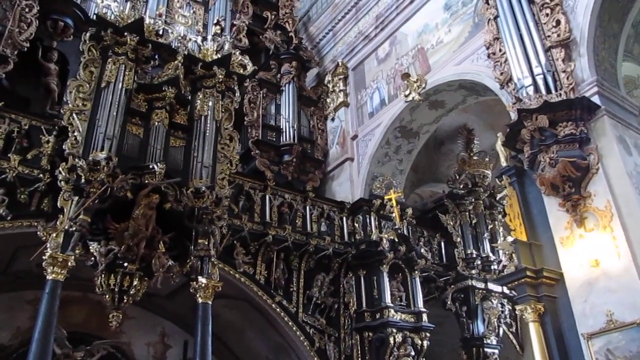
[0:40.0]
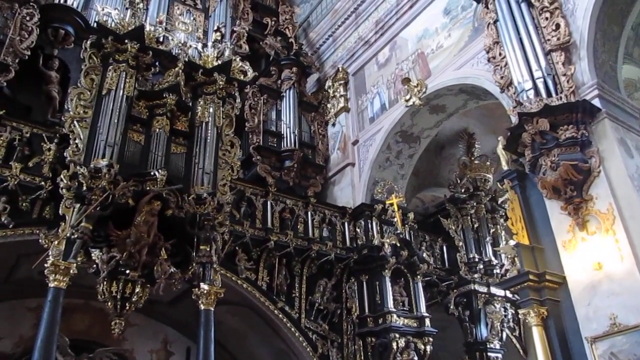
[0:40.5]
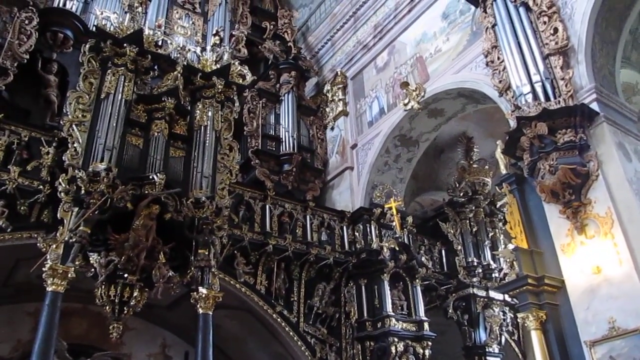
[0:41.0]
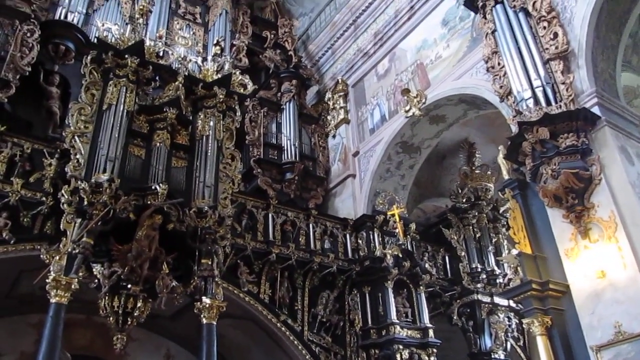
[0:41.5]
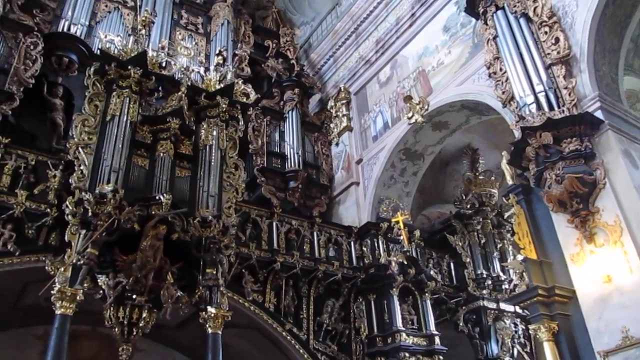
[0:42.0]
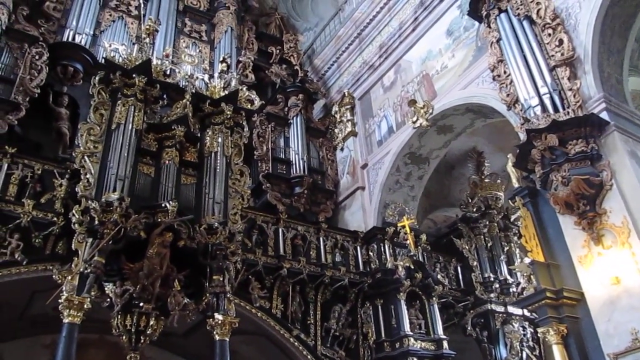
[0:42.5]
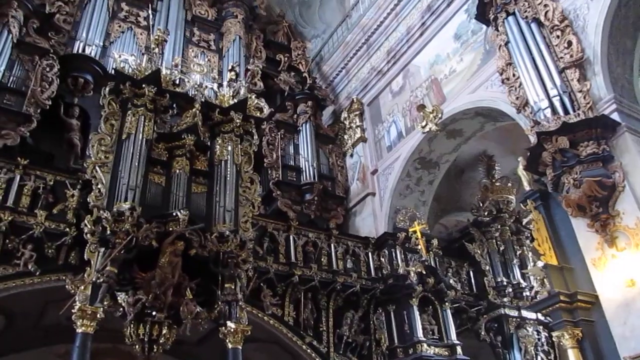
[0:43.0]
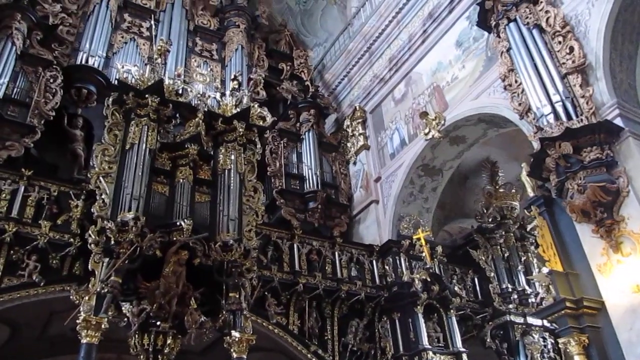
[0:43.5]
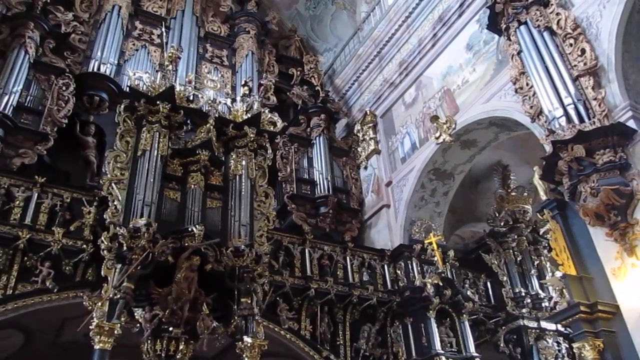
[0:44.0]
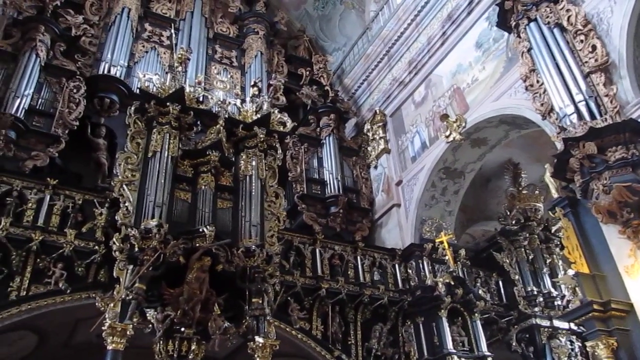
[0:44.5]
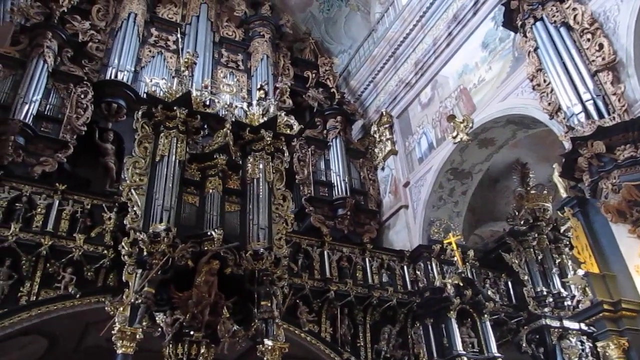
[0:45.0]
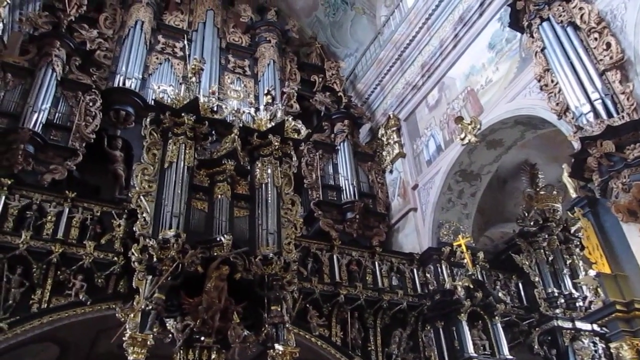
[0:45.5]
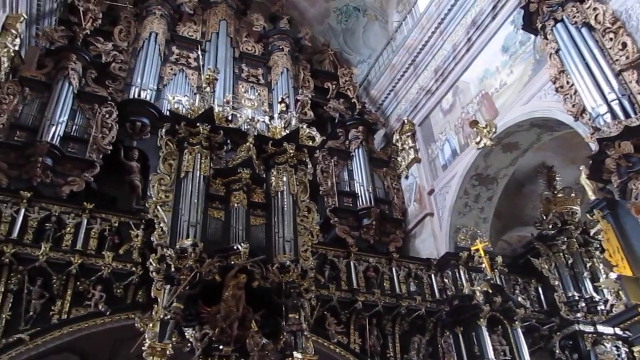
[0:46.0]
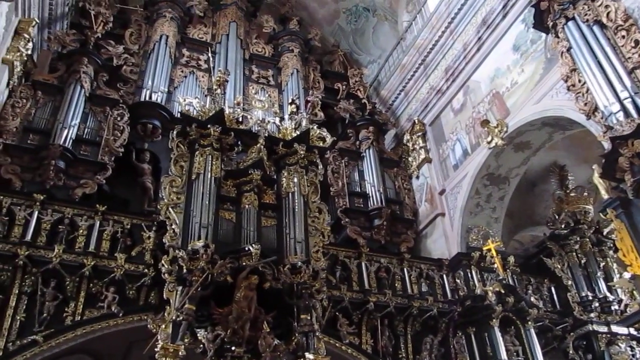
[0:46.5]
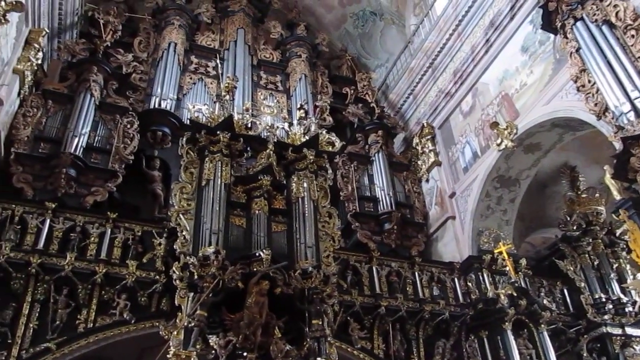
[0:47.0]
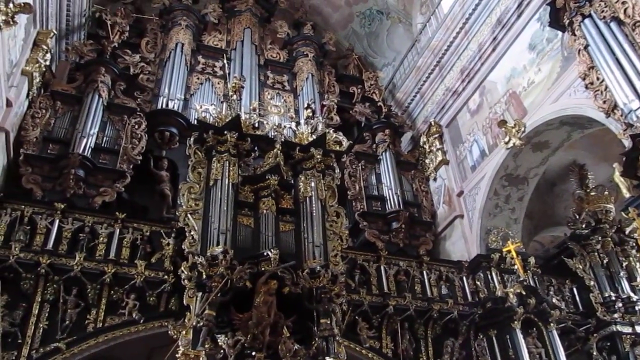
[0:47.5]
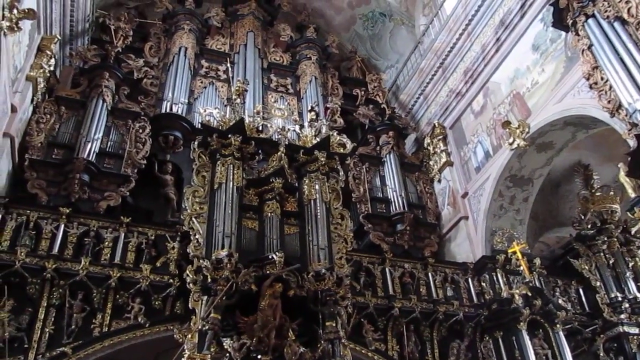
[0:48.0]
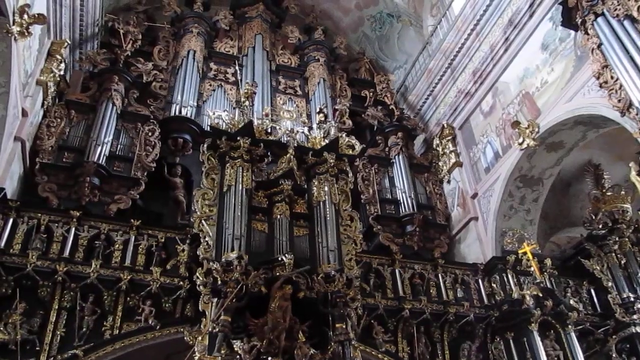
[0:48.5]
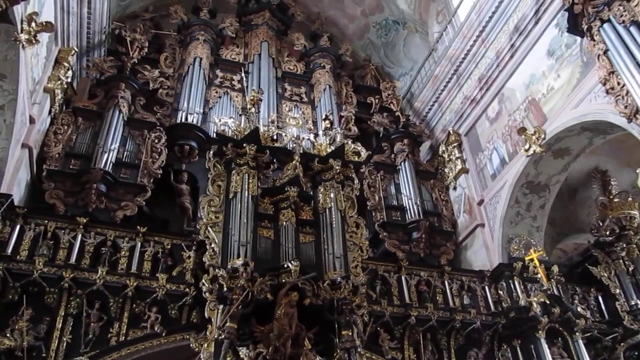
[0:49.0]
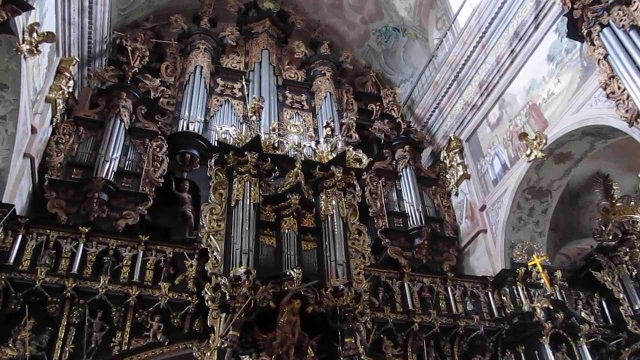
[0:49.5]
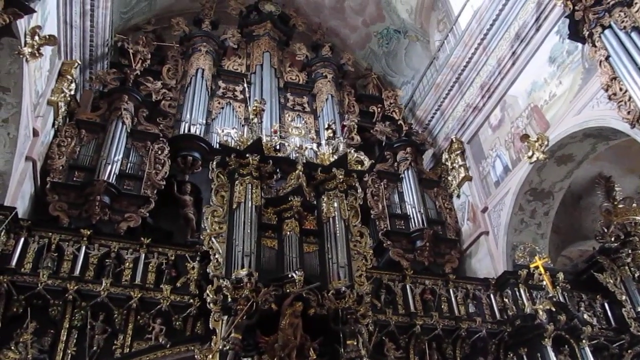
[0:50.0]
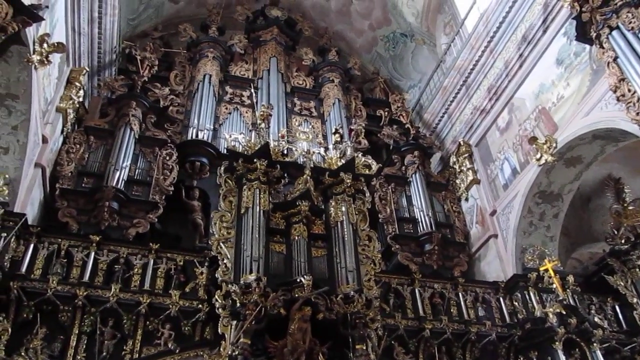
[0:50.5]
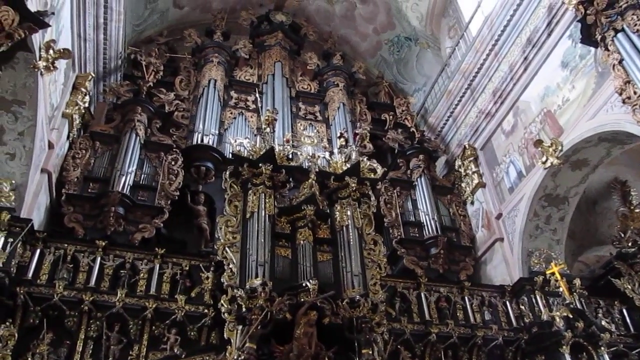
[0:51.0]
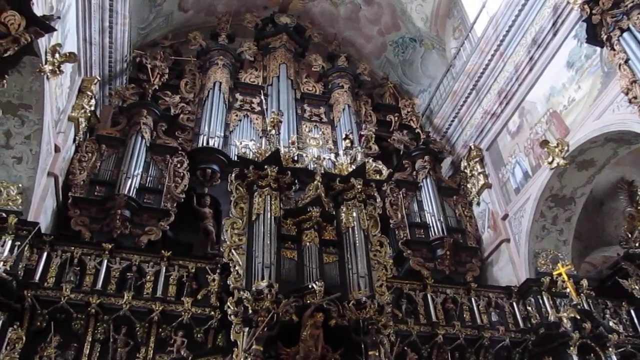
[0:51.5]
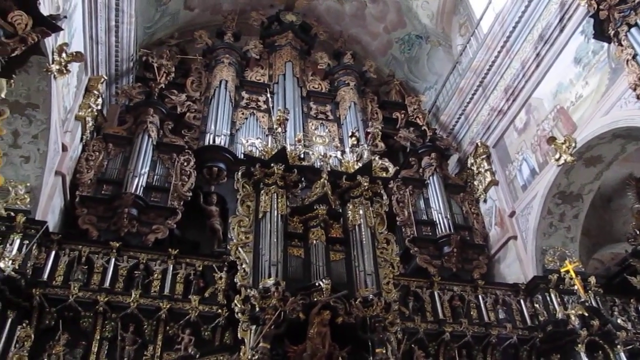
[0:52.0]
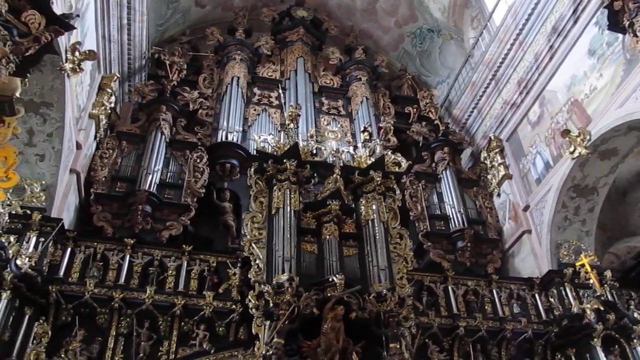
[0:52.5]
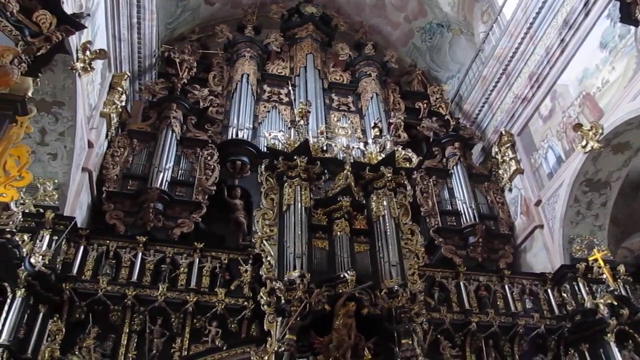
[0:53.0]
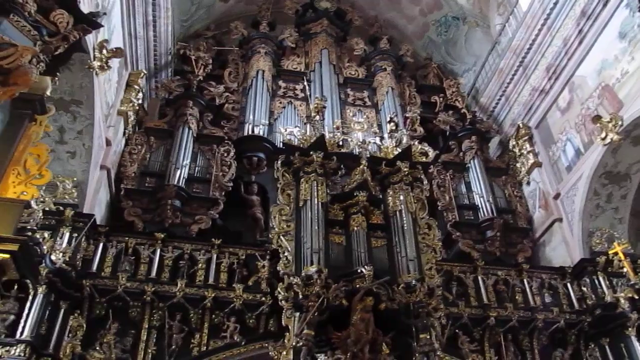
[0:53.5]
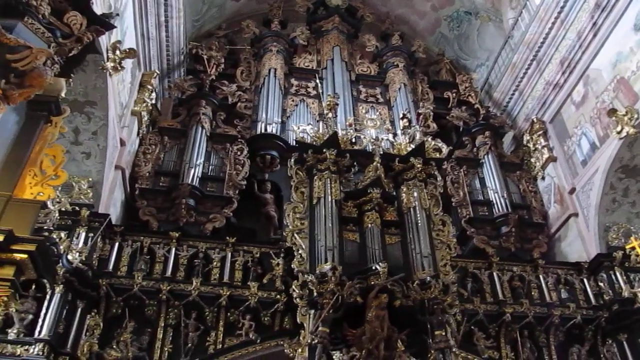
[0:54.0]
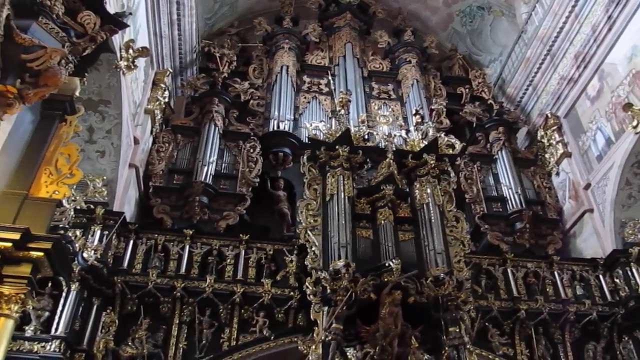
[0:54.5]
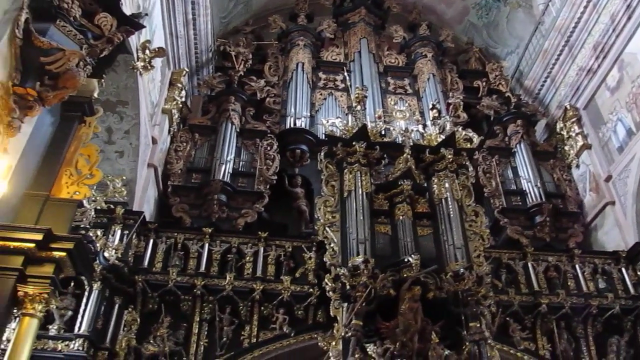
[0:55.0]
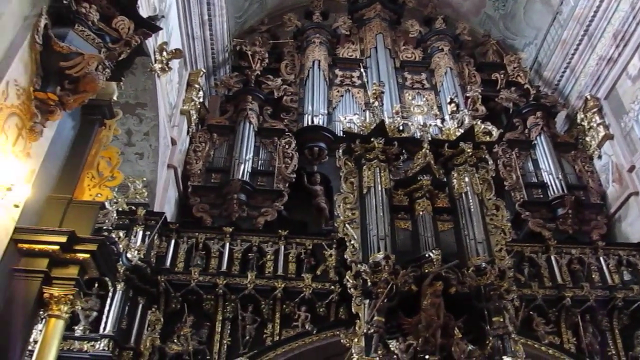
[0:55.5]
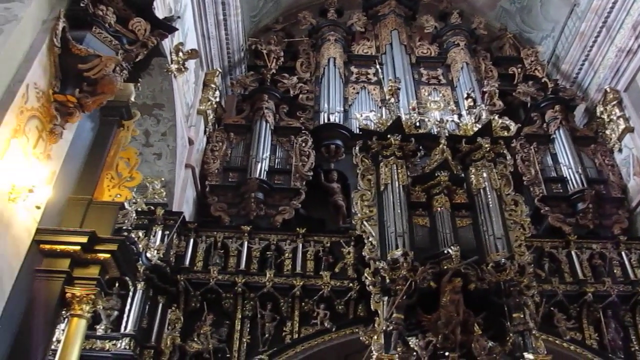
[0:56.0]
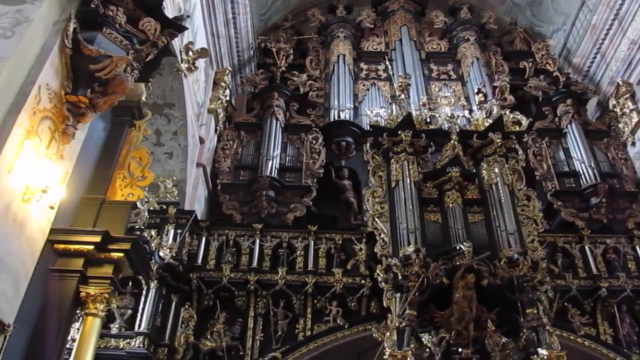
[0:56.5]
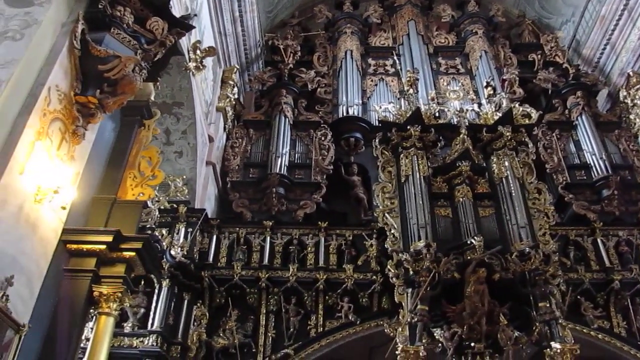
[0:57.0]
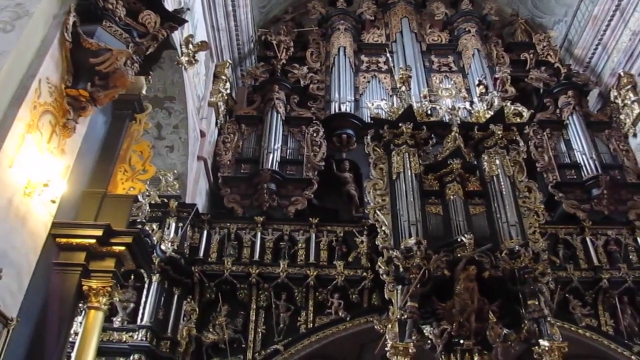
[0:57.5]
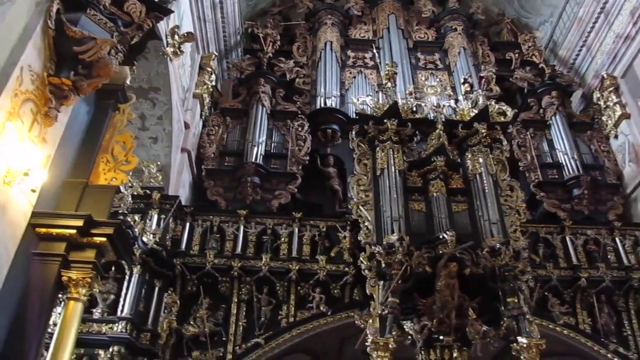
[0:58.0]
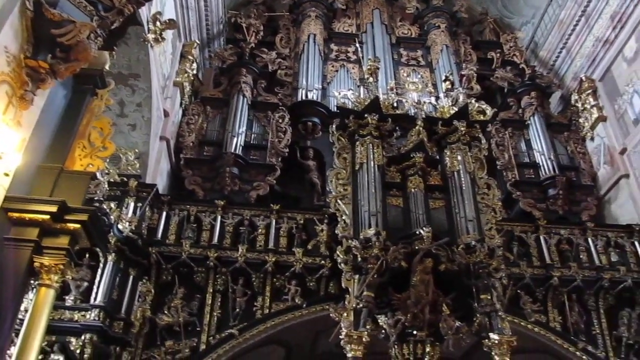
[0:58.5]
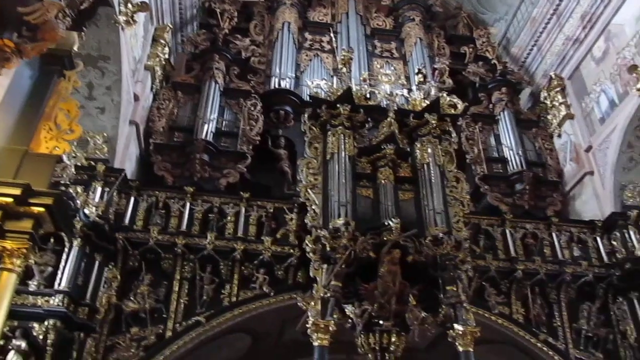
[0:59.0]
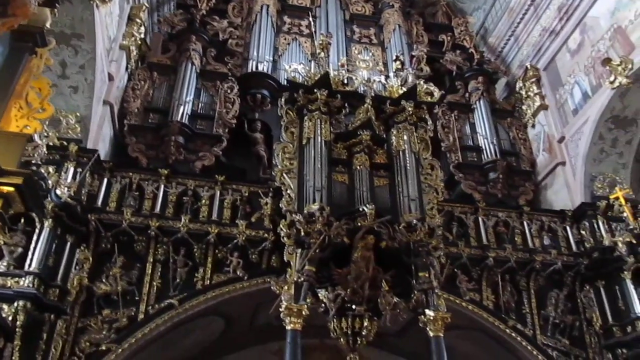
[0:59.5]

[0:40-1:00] The camera moves upward and a little to the left, showing the full view of the altar with many complex sculptures and a lot of artwork, including many religious figures, angels and saints. The view shifts toward the left, where there is some kind of yellowish lighting on the left side, and then shifts back right toward the center of the altar. The altar has a lot of detailed artwork, religious figures and religious symbols, including figures of people, saints and angels.